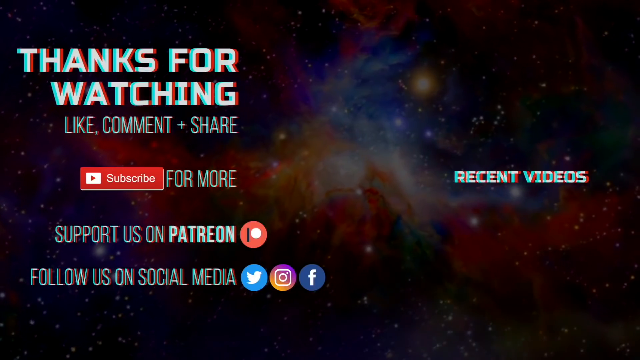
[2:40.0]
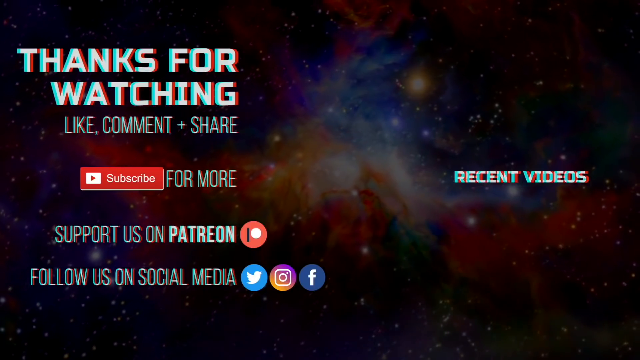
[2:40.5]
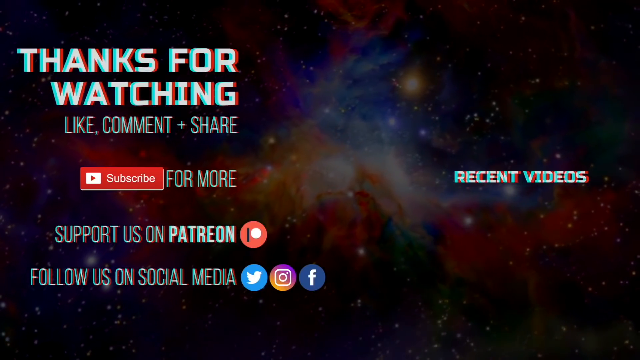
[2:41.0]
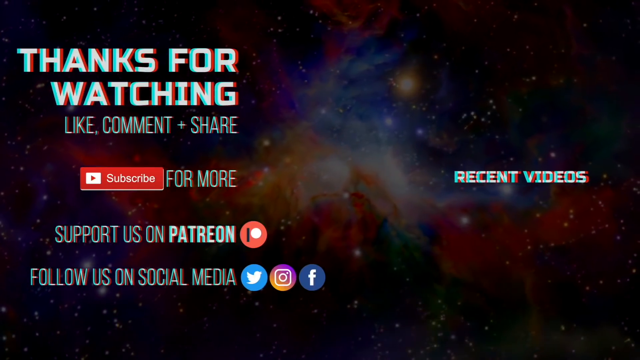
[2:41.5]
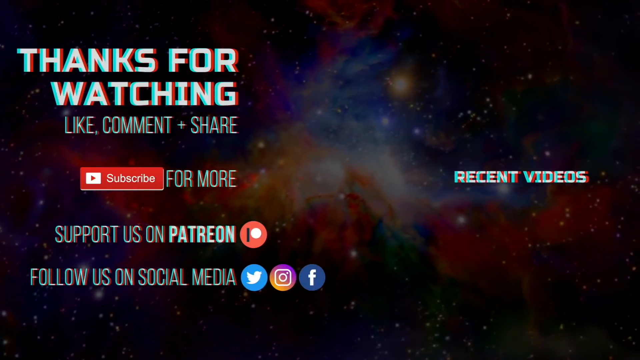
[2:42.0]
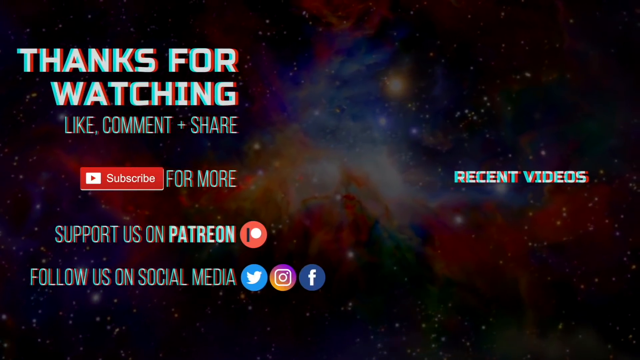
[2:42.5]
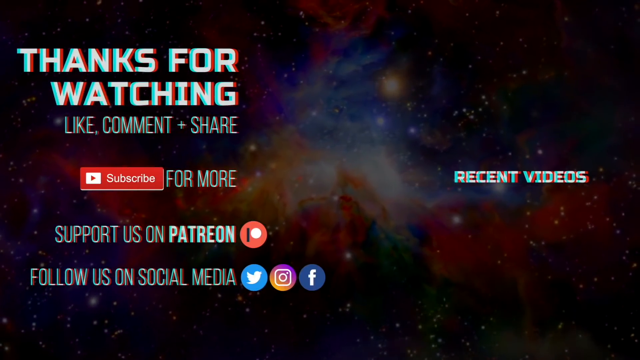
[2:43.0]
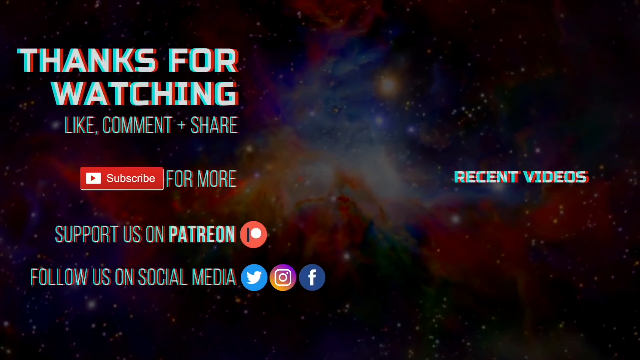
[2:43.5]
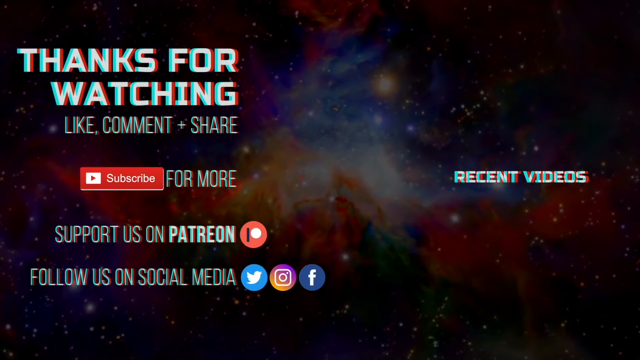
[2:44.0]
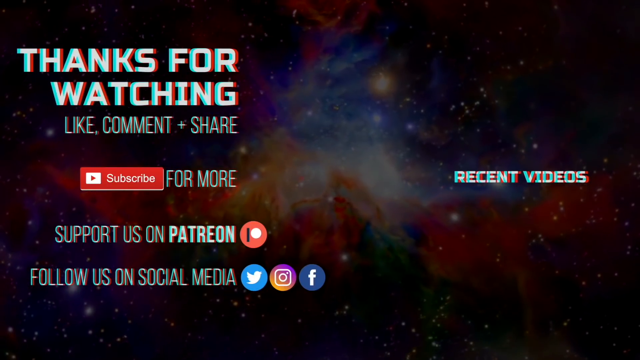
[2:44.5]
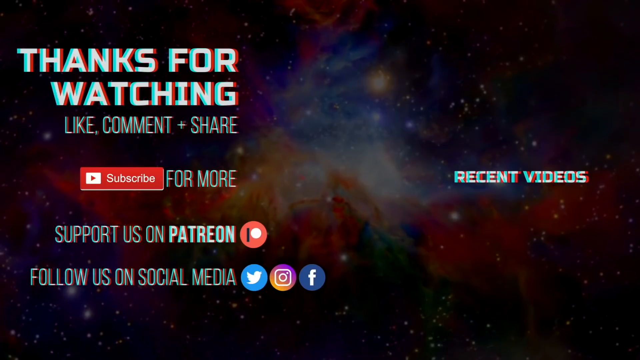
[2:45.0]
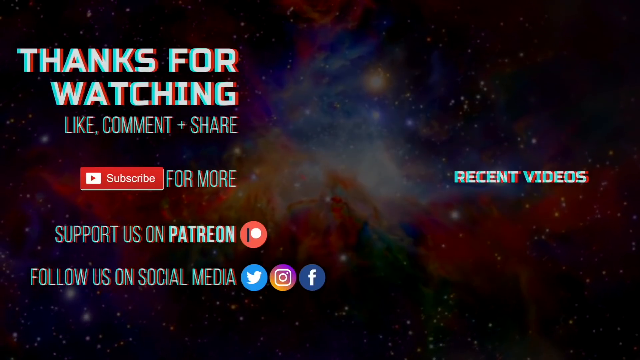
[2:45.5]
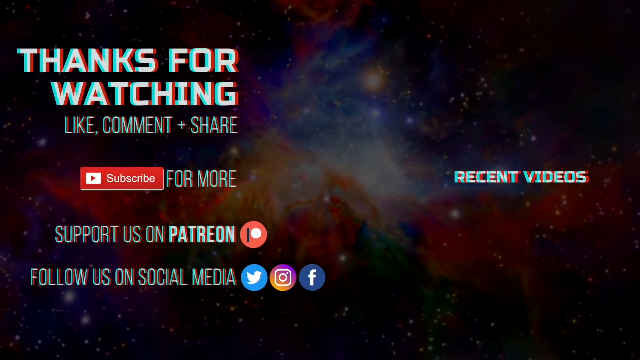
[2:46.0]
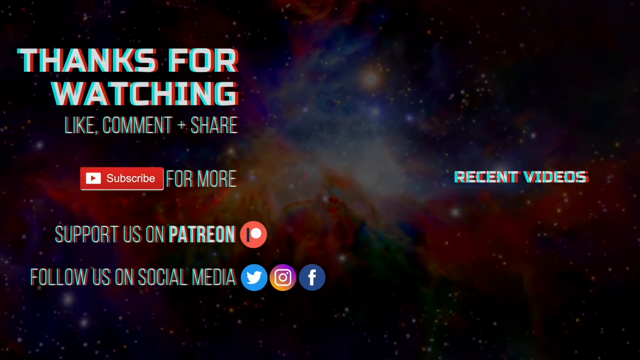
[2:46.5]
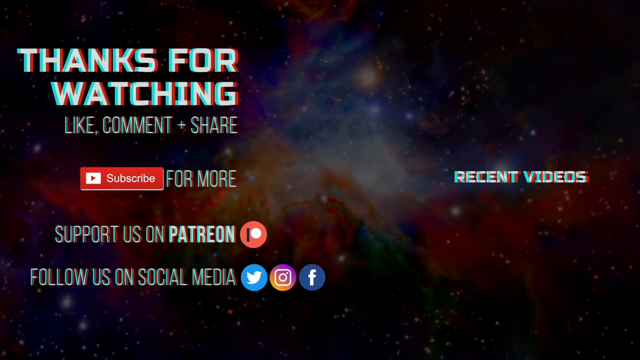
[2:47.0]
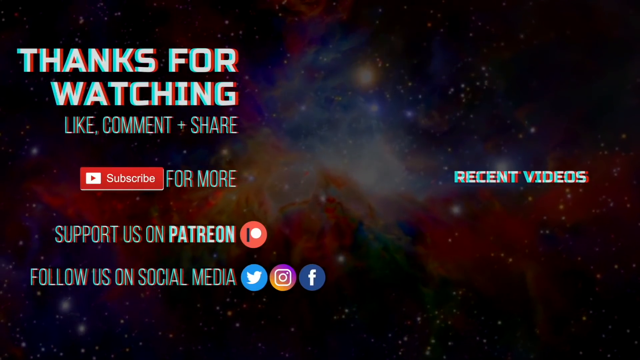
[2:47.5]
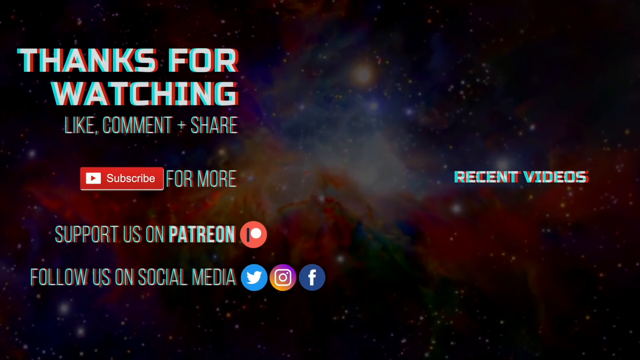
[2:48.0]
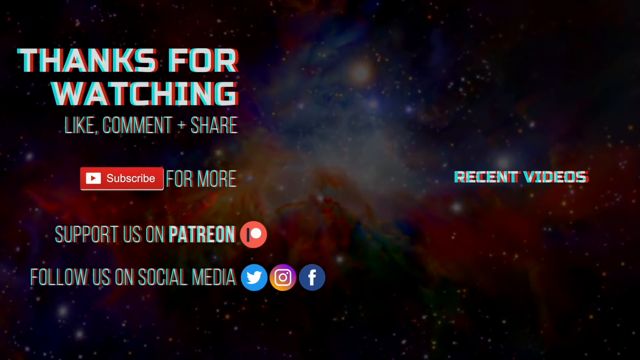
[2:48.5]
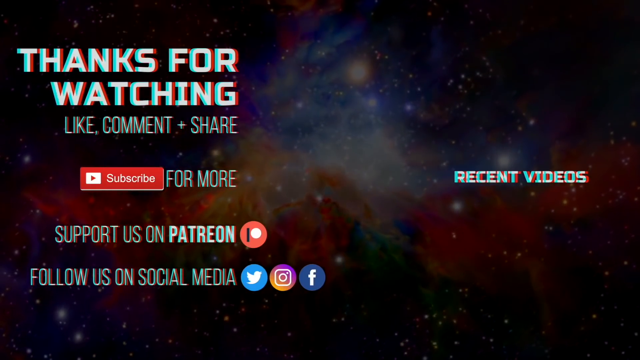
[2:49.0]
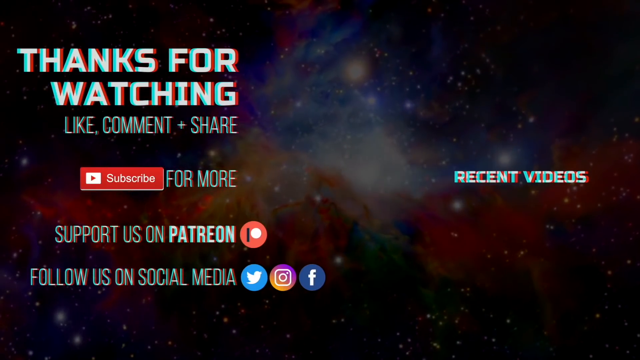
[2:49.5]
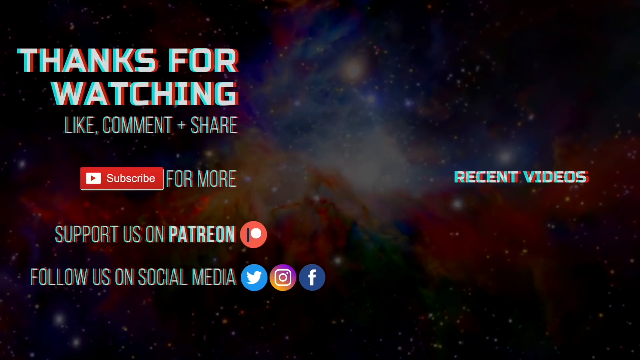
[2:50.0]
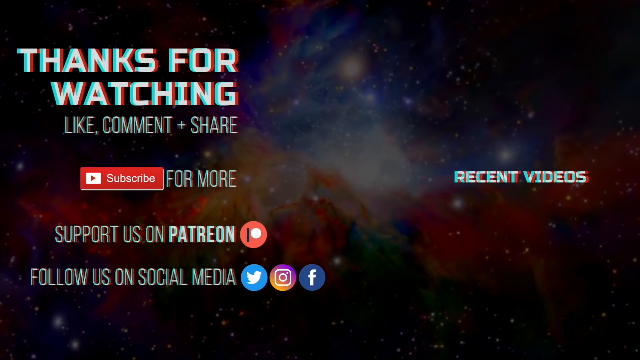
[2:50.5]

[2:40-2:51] A colorful space background slowly animates, with text saying "thanks for watching," "like, comment, + share," "subscribe for more," and "support us on Patreon" with a Patreon logo, and "follow us on social media" with Twitter, Instagram, and Facebook logos. On the right side it says "recent videos" above a large empty space.